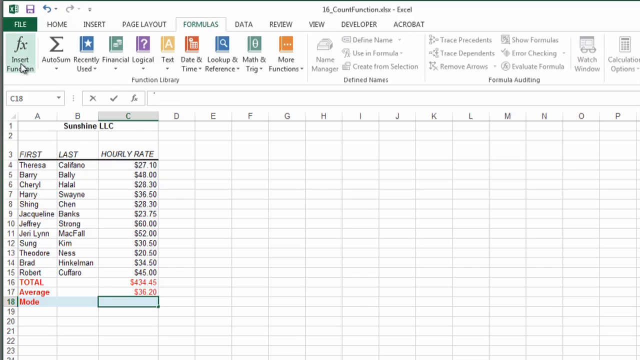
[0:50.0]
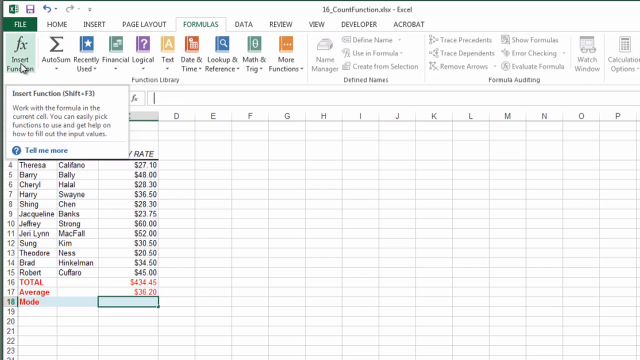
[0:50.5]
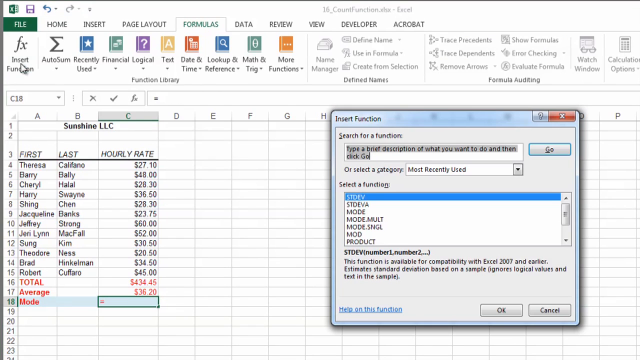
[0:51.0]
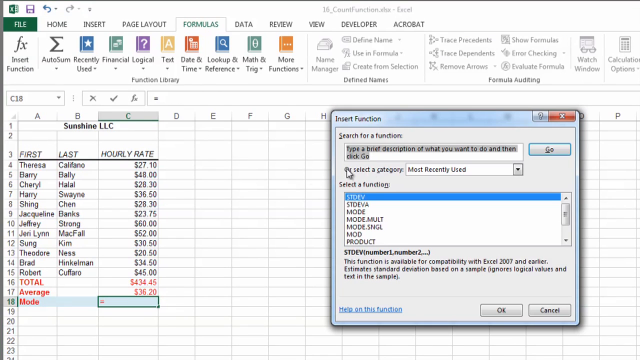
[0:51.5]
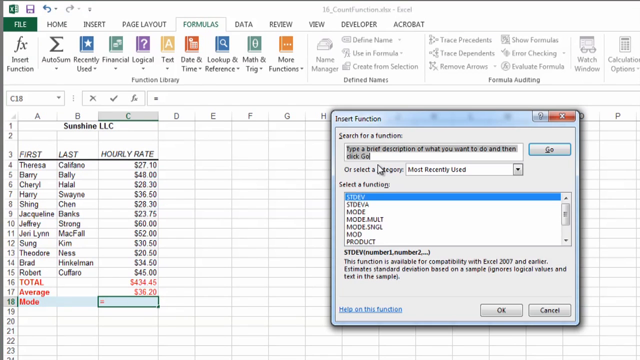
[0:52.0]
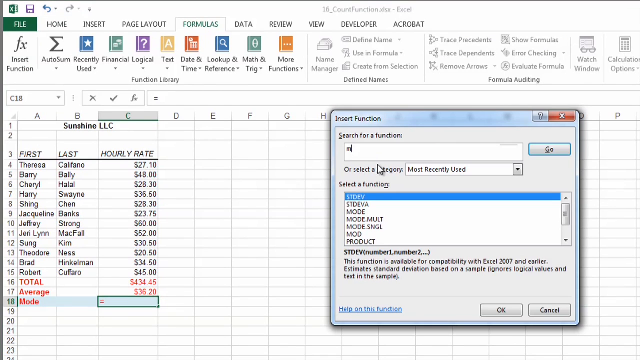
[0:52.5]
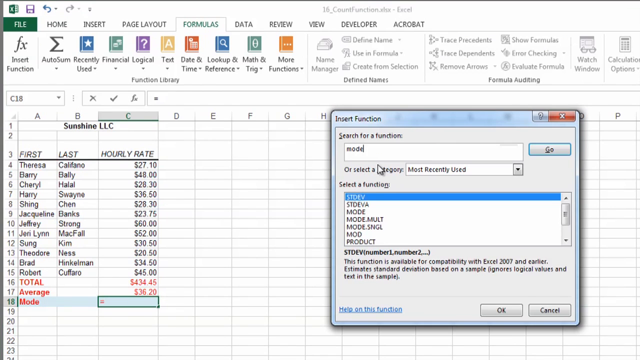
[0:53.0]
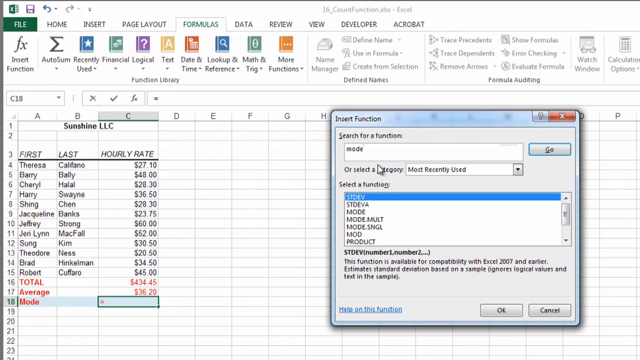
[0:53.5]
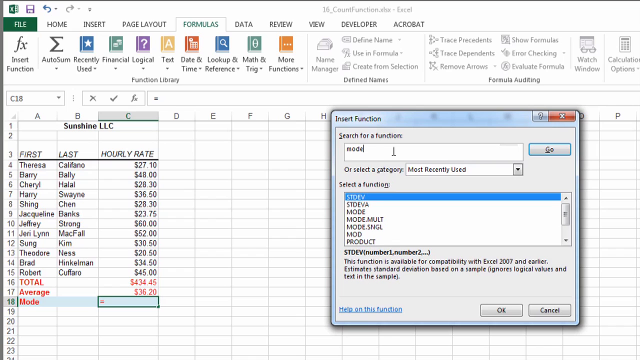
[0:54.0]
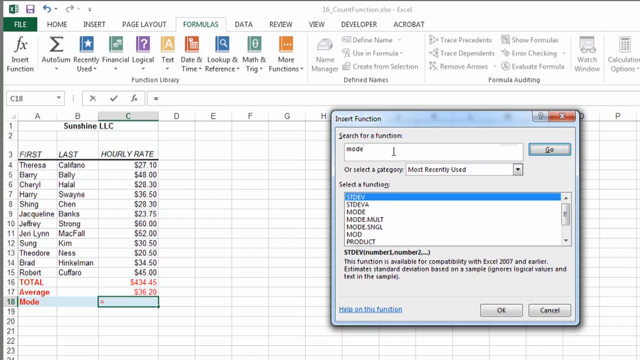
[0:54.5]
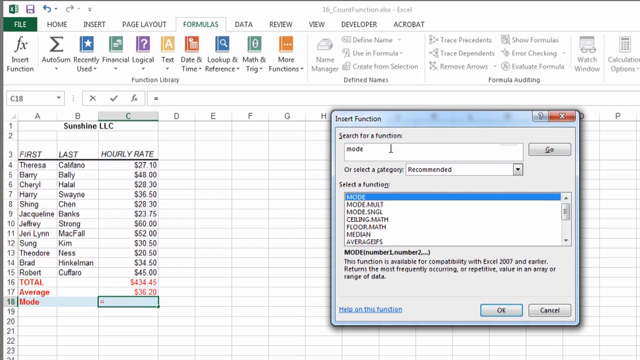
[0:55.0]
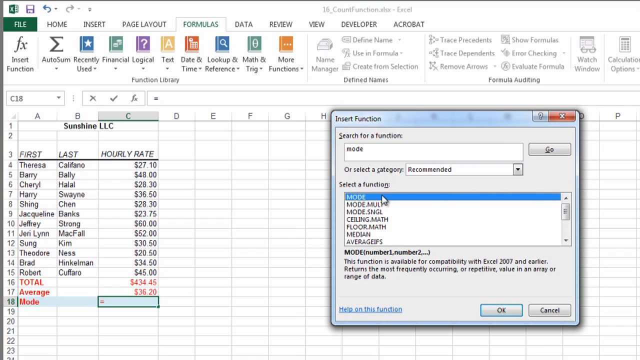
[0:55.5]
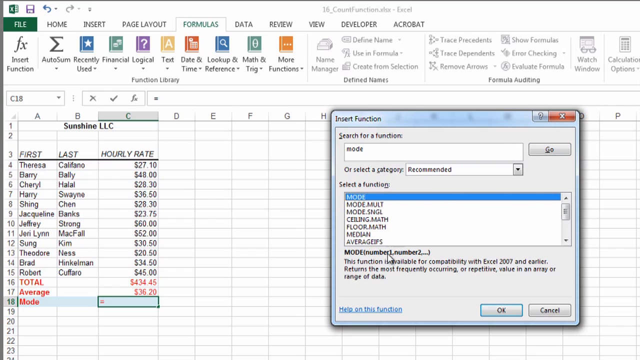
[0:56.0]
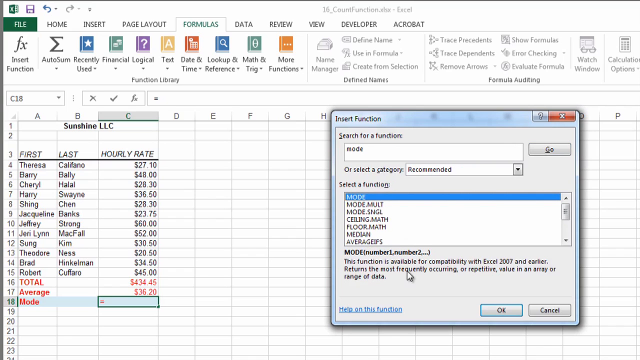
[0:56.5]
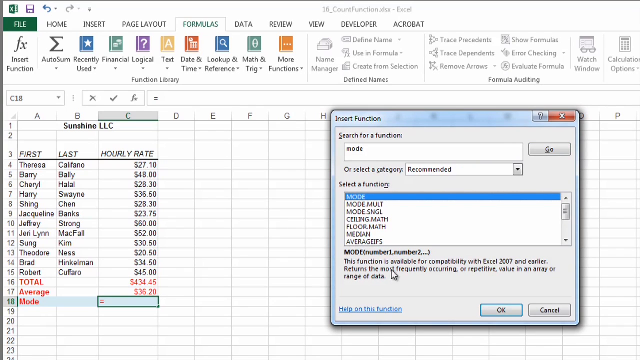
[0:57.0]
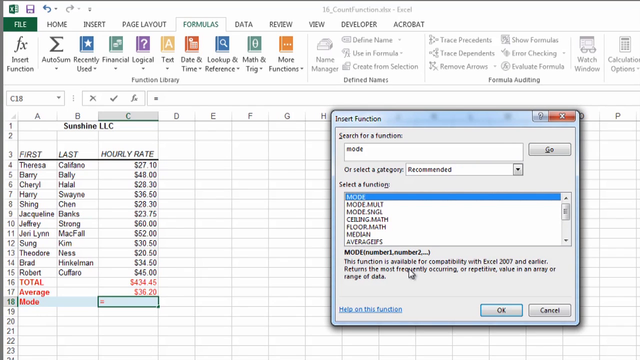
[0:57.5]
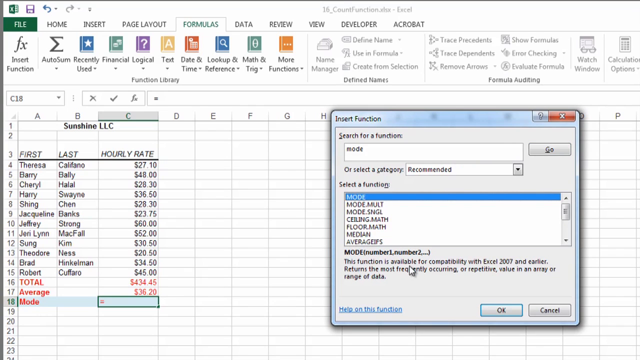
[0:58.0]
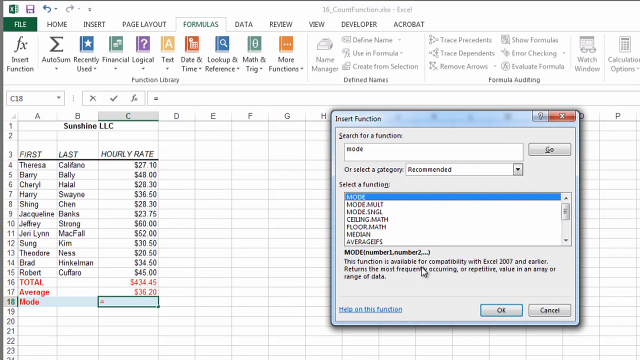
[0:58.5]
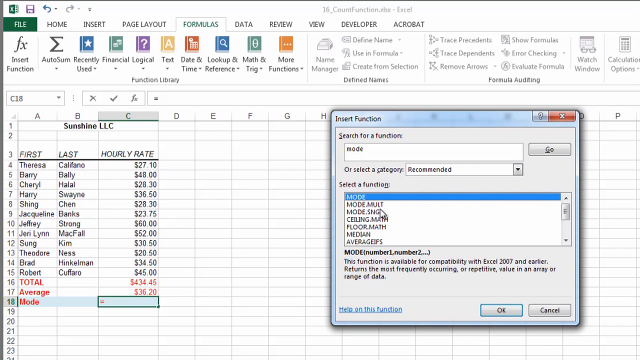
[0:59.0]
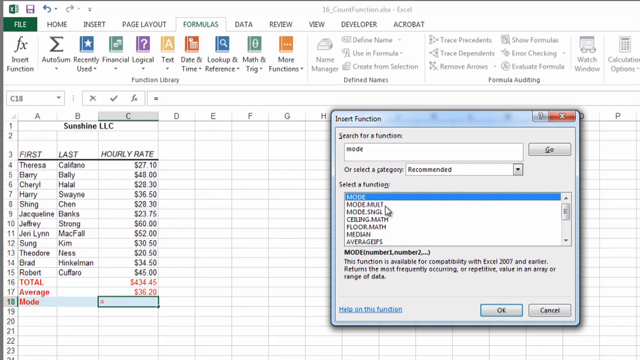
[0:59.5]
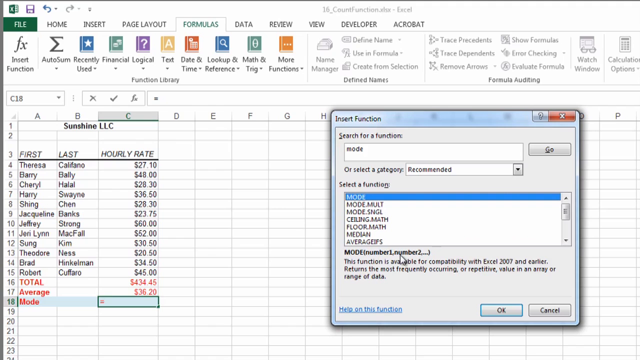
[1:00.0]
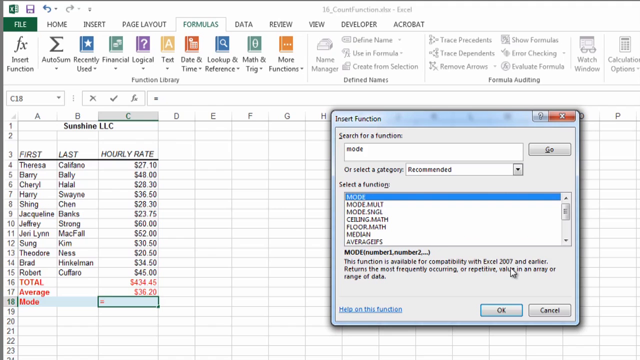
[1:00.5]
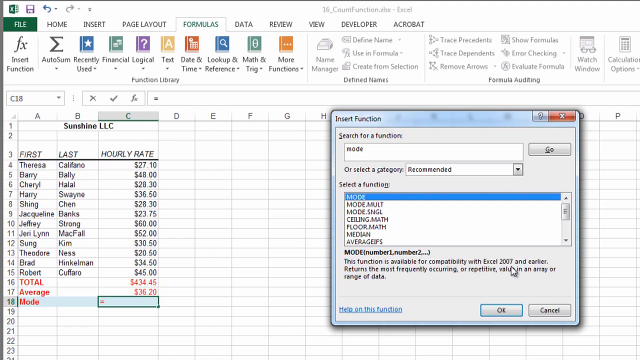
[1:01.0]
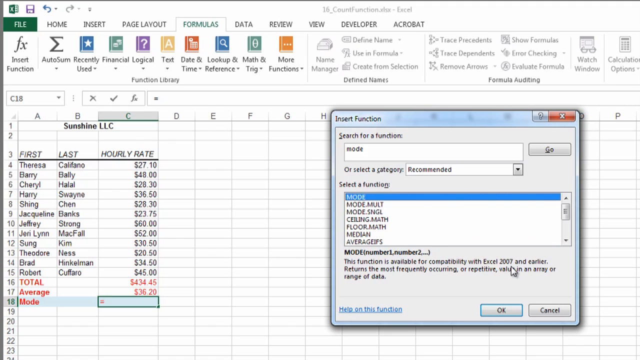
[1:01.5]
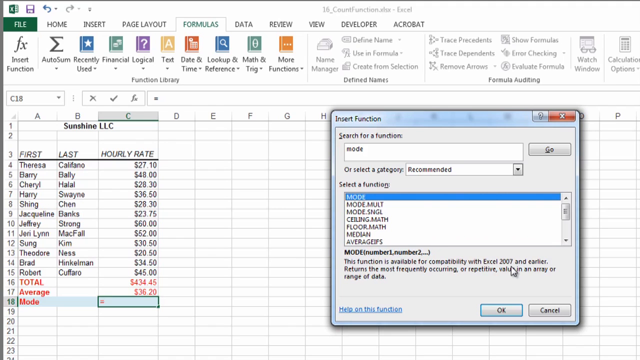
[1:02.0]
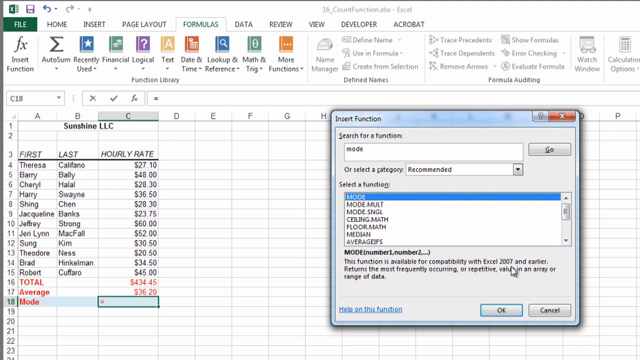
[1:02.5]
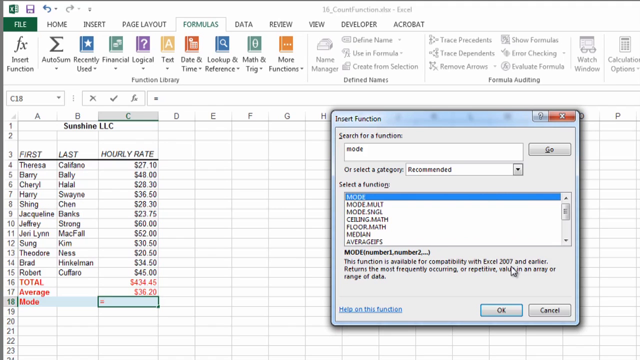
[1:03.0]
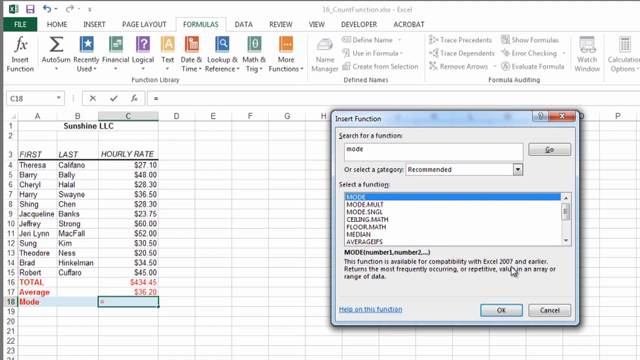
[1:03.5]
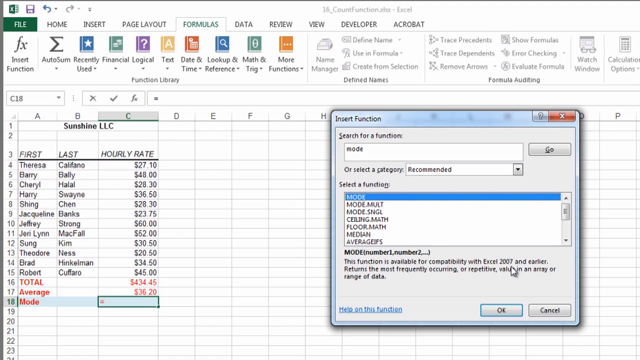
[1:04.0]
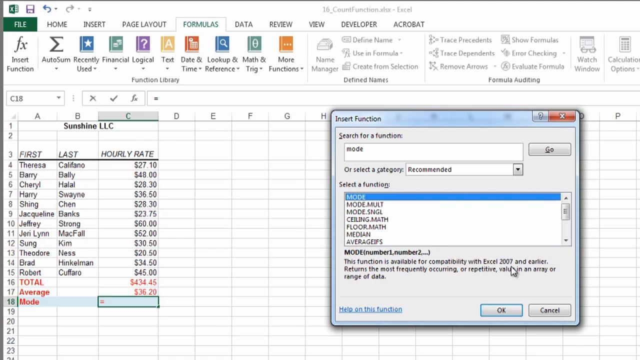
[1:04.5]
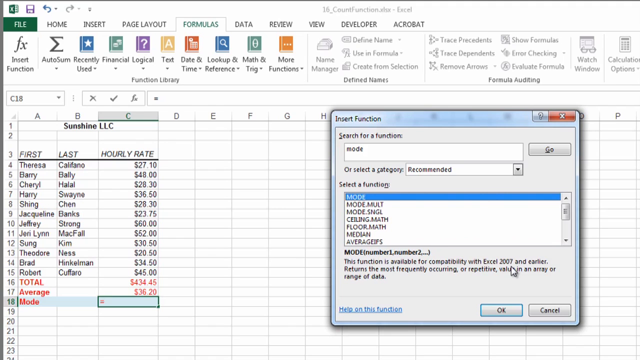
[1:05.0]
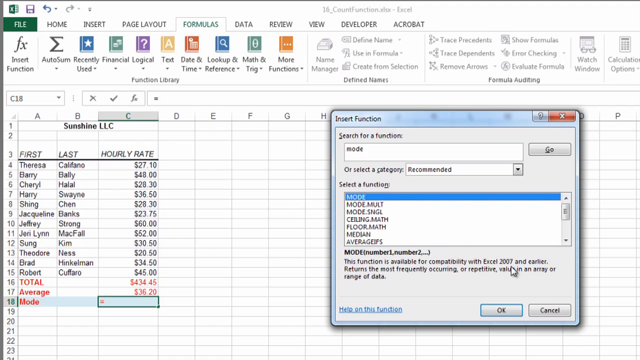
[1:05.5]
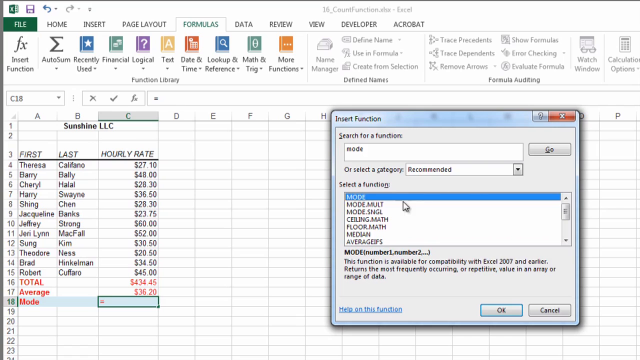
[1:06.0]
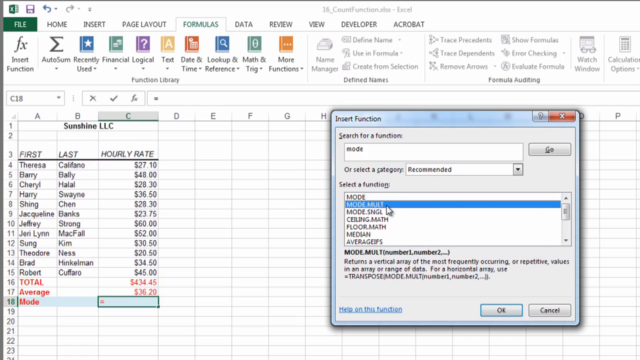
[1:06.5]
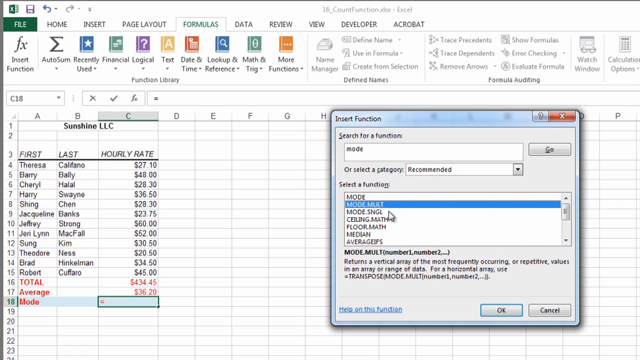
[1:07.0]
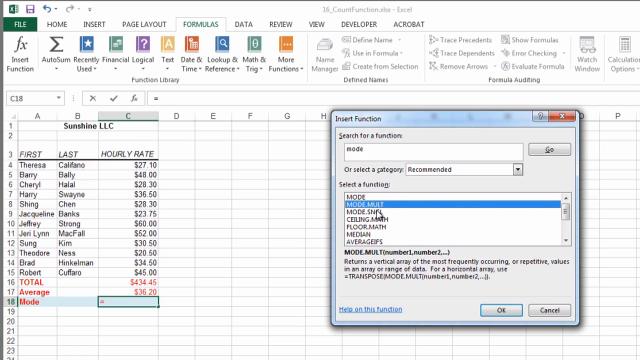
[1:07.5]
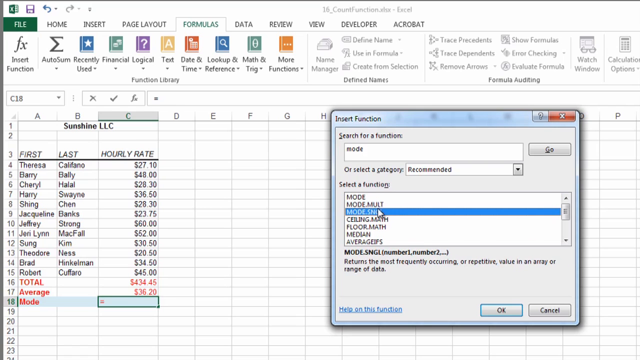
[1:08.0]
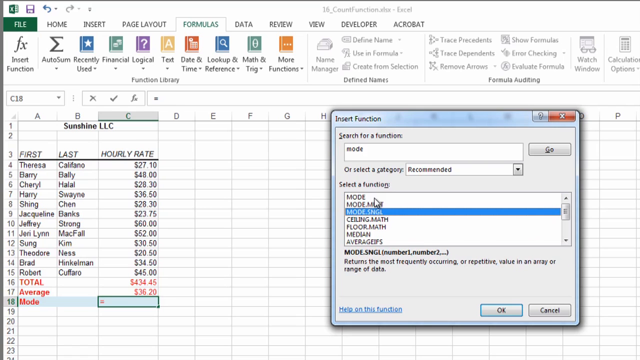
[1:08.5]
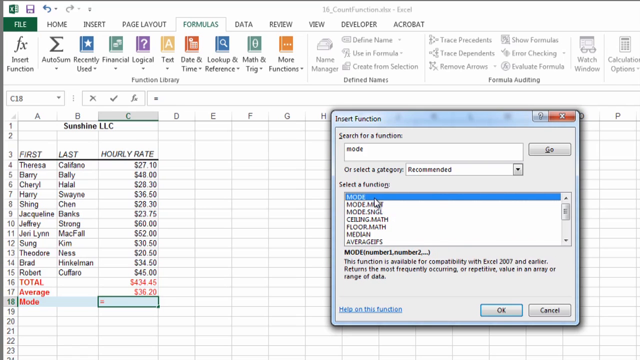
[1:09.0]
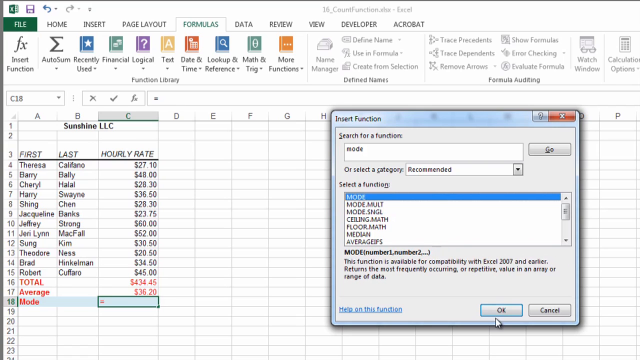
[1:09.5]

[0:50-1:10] An Excel window is shown, with the spreadsheet title "16_count function.xhx" prominently displayed at the top. The spreadsheet records data for a company called Sunshine LLC, including the first name, last name and hourly rate of various employees. The instructor clicks the Insert Function tool on the top left of the page, and an Insert Function window appears with instructions that say "type a brief description of what you want to do and then click Go". She types the word "mode" and clicks Go. Mode appears at the top, and a description of the function is displayed at the bottom.